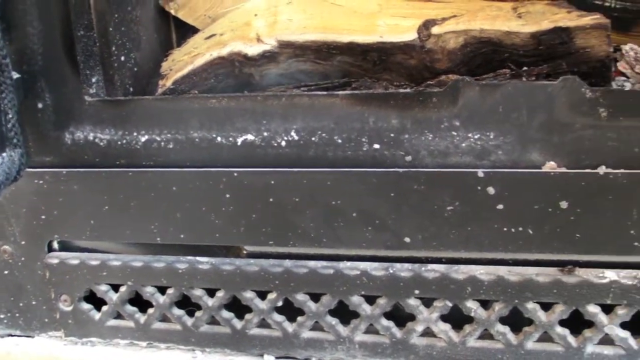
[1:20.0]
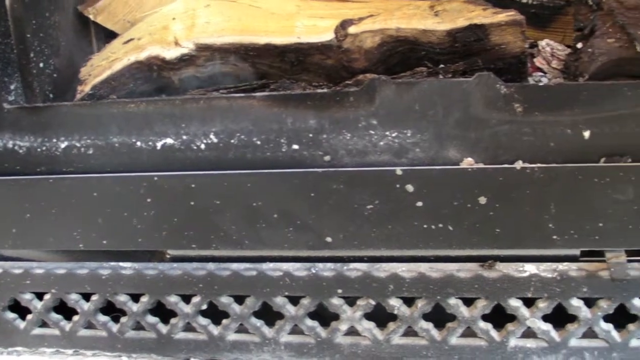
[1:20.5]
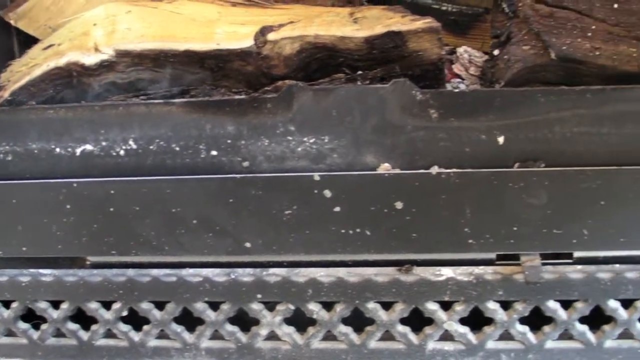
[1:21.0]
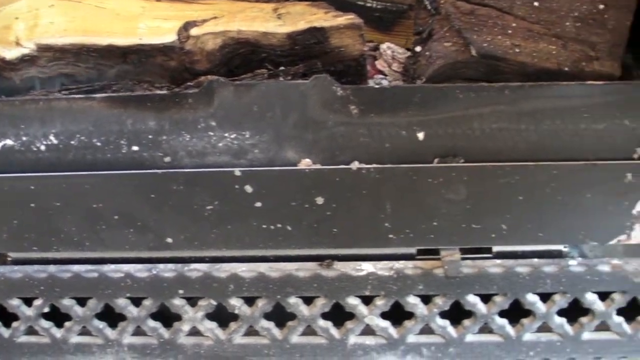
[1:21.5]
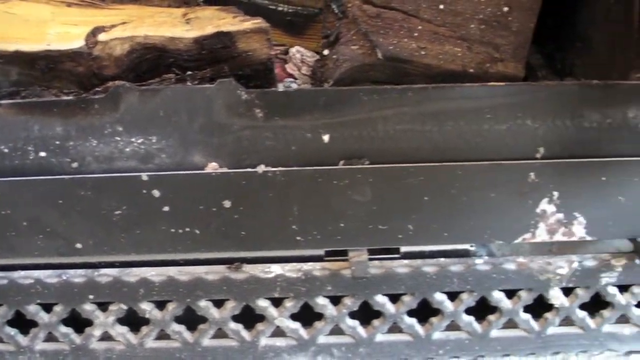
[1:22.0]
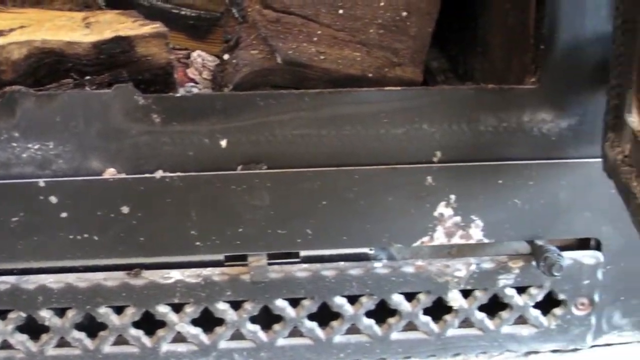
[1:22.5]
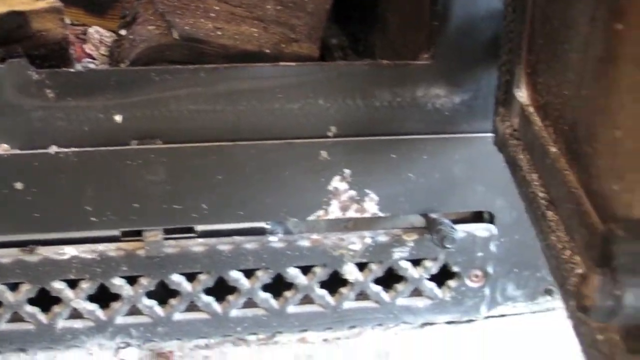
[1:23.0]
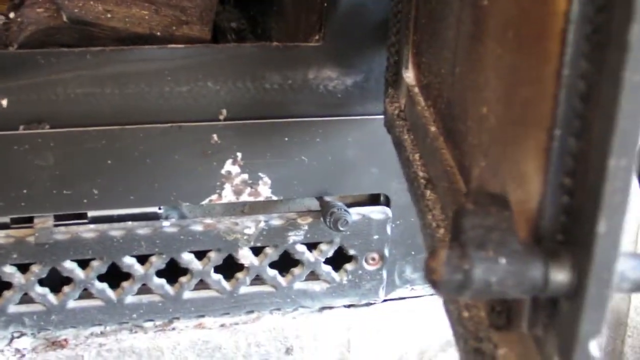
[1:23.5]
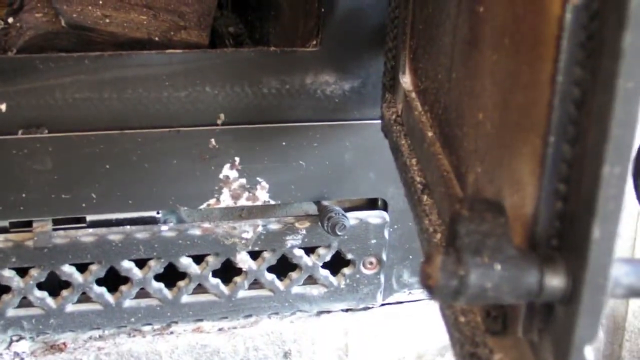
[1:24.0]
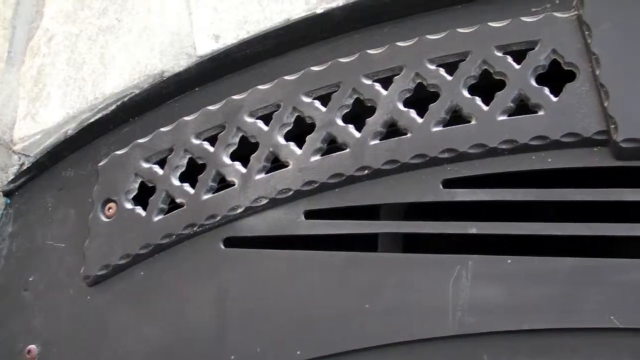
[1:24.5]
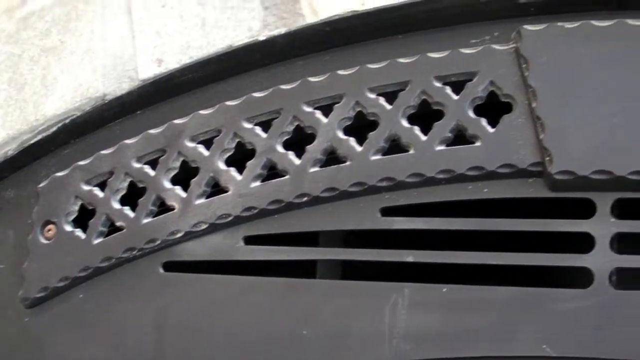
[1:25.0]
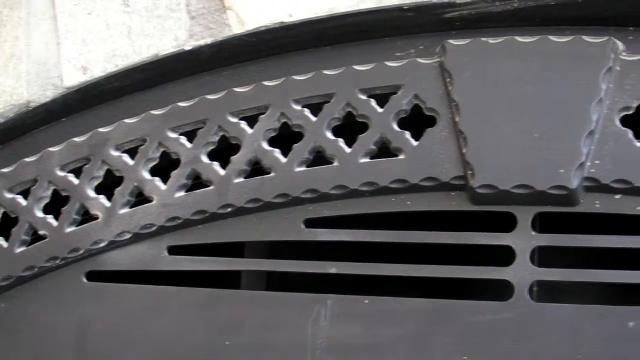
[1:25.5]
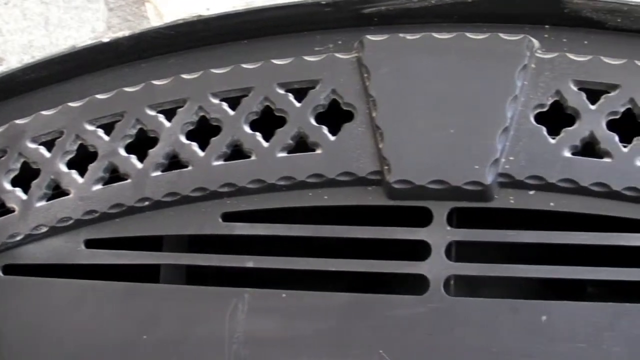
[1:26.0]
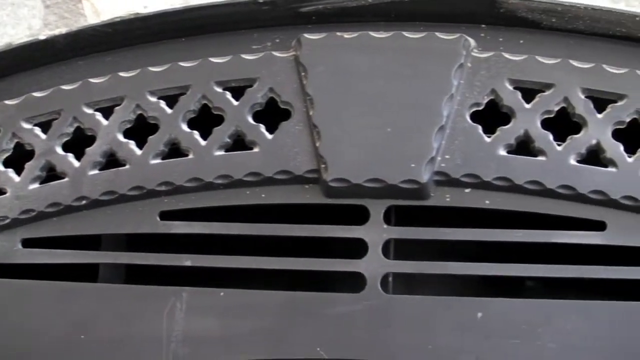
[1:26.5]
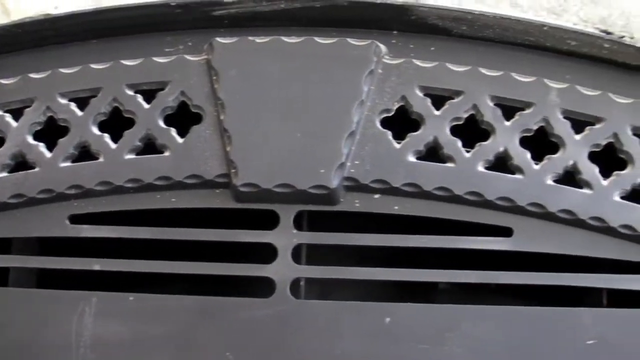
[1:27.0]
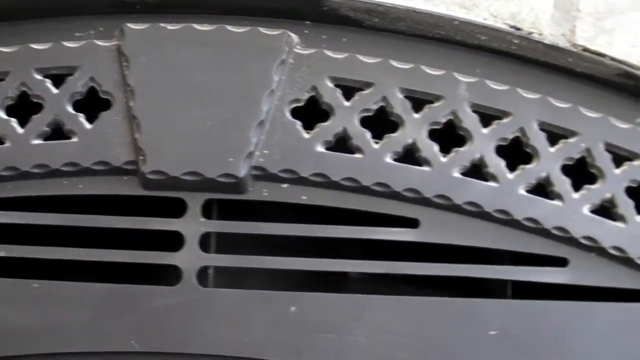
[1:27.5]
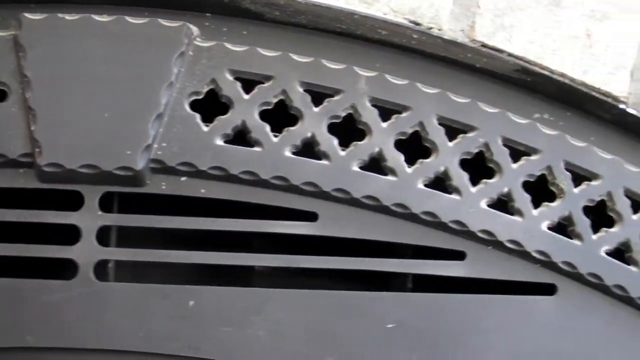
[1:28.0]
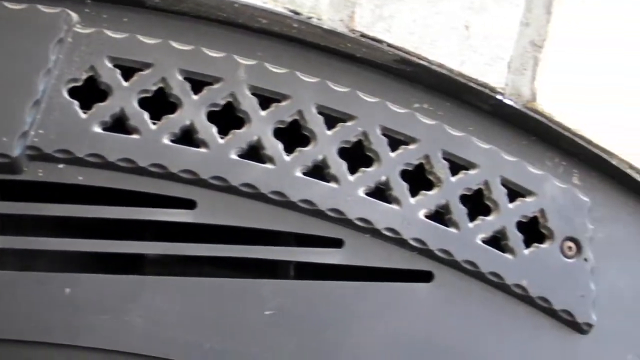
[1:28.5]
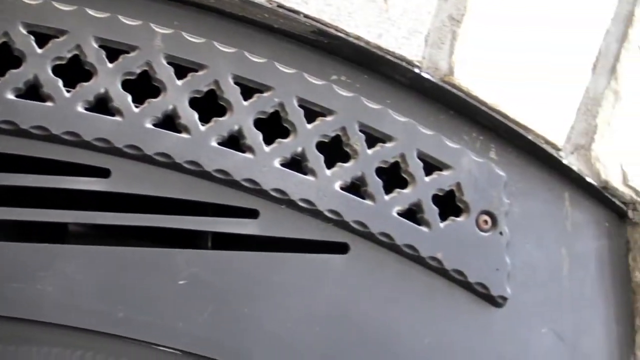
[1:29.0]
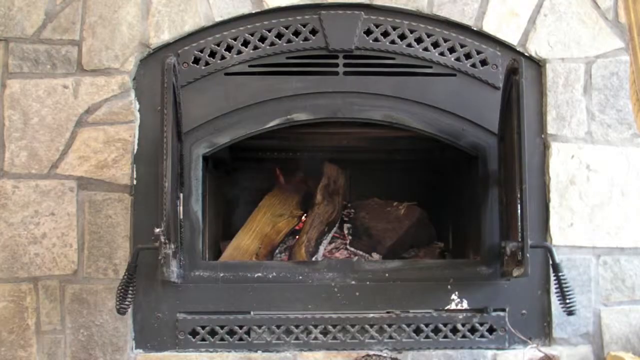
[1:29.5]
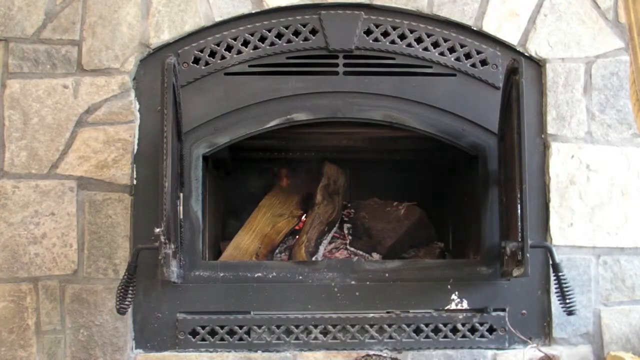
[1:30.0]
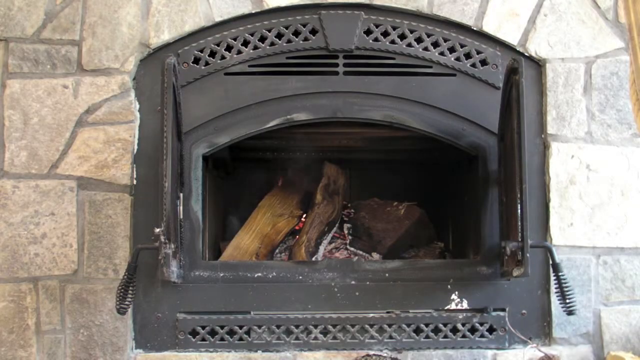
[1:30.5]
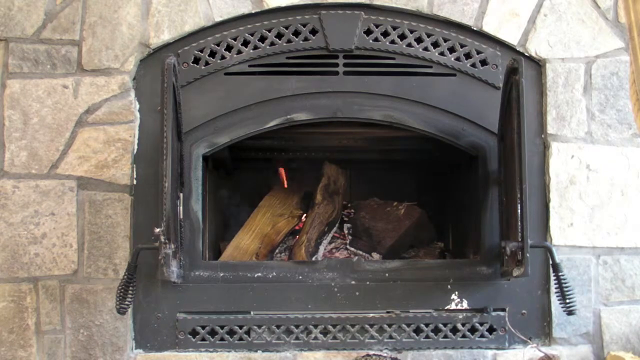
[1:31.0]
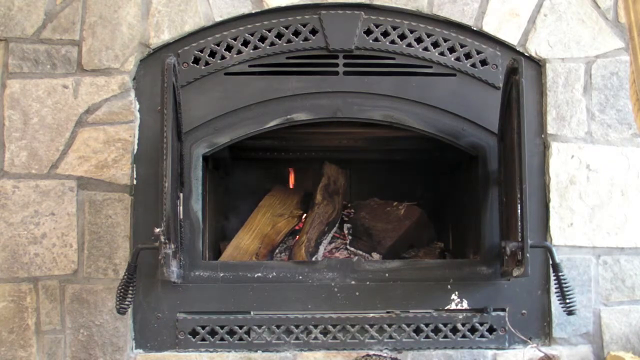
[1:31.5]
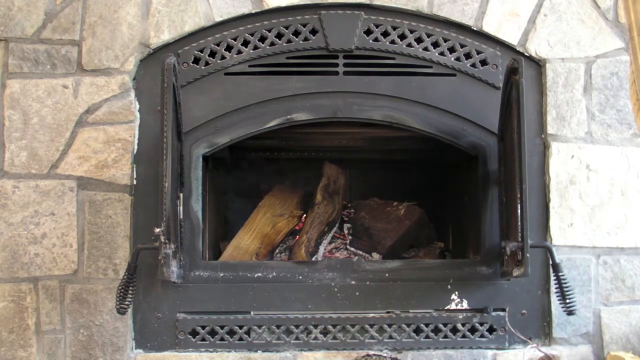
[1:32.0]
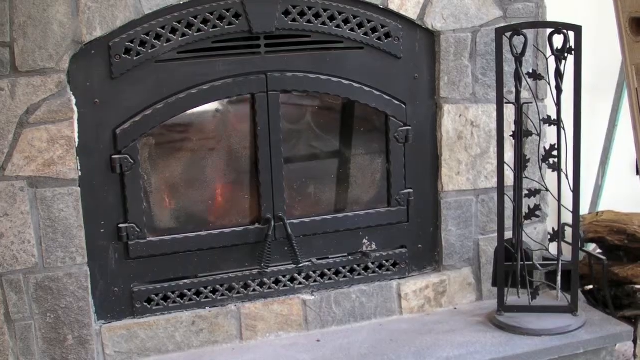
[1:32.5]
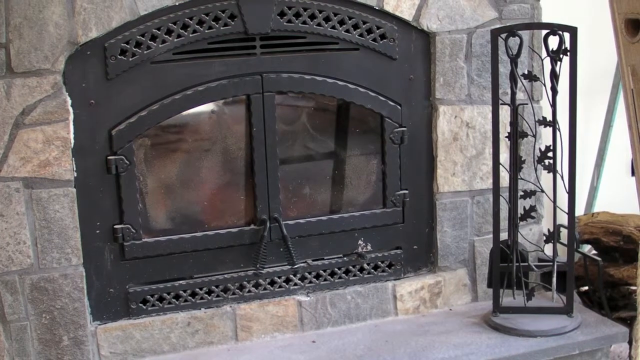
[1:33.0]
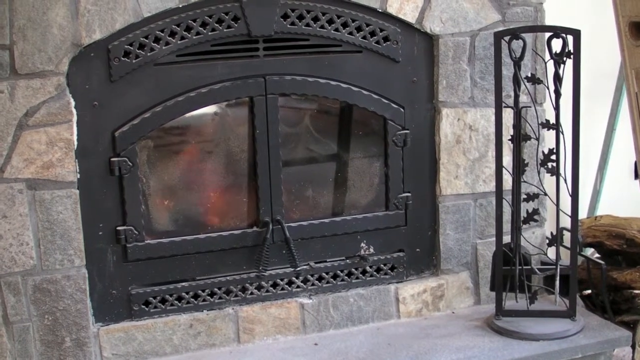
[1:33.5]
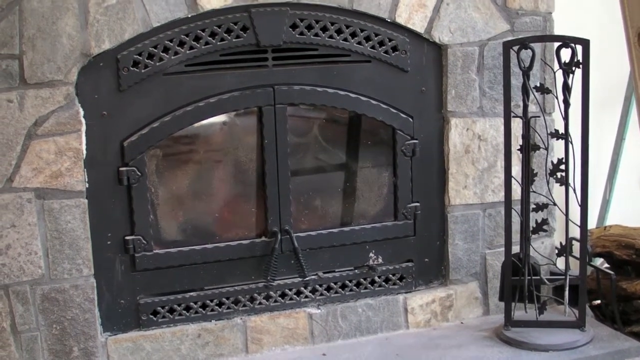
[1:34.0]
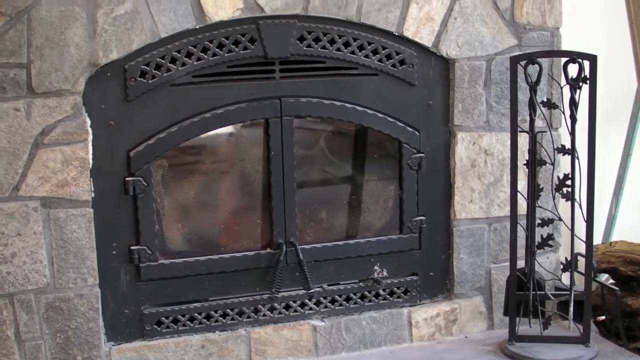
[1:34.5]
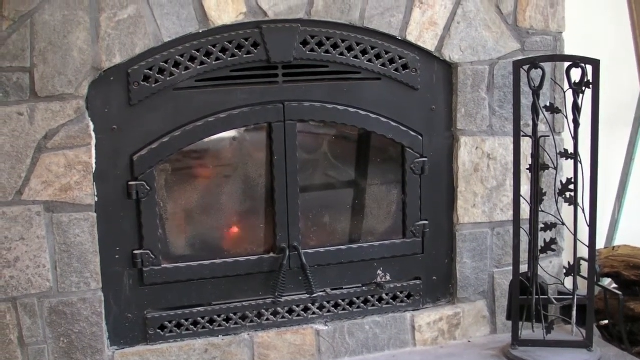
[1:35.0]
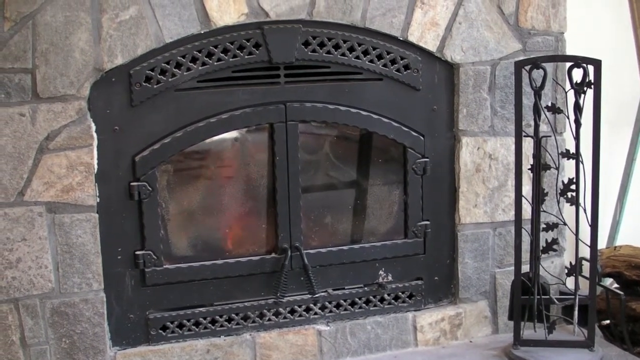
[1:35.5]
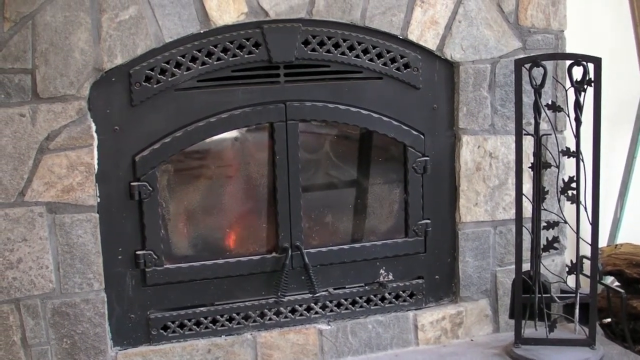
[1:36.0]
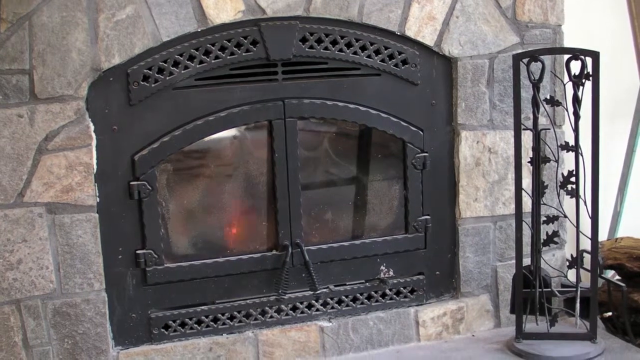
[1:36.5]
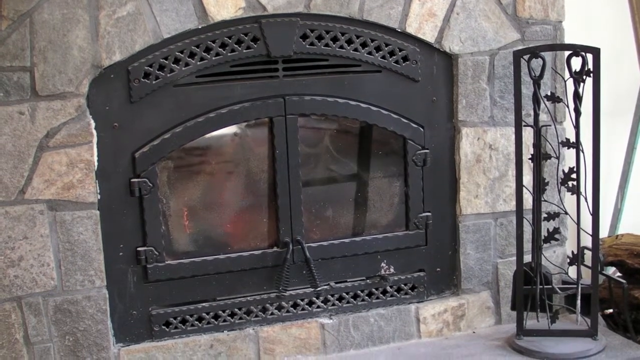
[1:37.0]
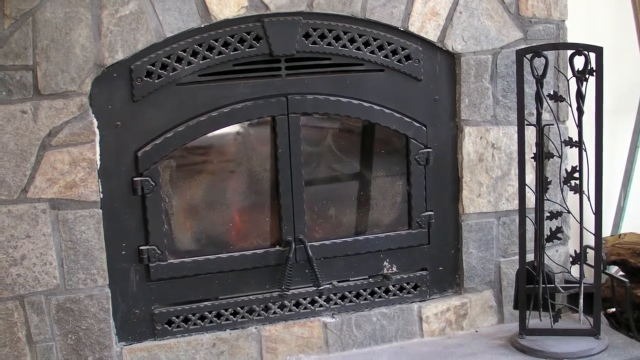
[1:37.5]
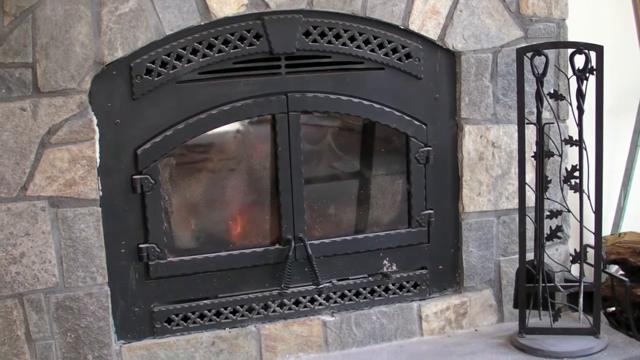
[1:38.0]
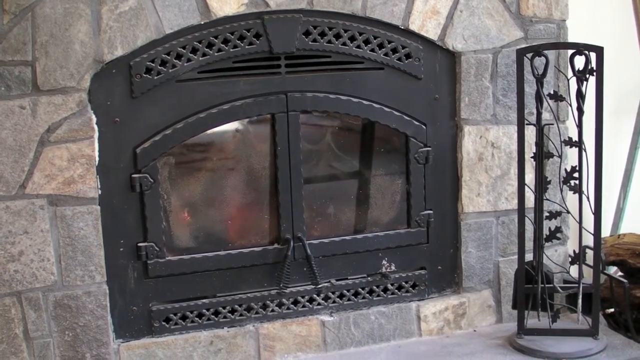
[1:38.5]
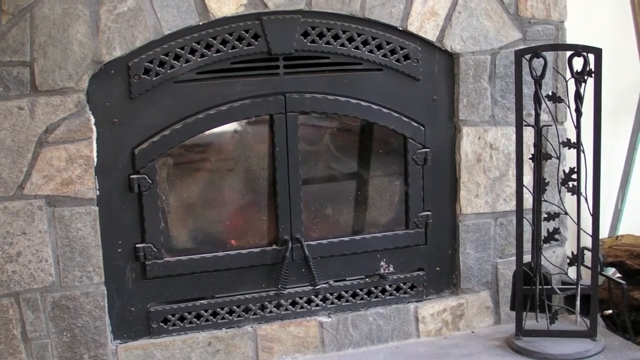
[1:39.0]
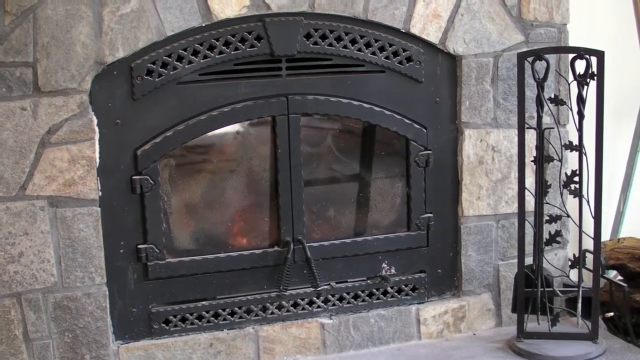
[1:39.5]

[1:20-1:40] Very little smoke comes from the fireplace, which has vents inside; even when it is open, hardly any smoke comes out, and smoke can be seen trying to come out through the vents. A picture shows the fireplace can also be used closed. The fireplace is small, neat, and stuck on the wall.